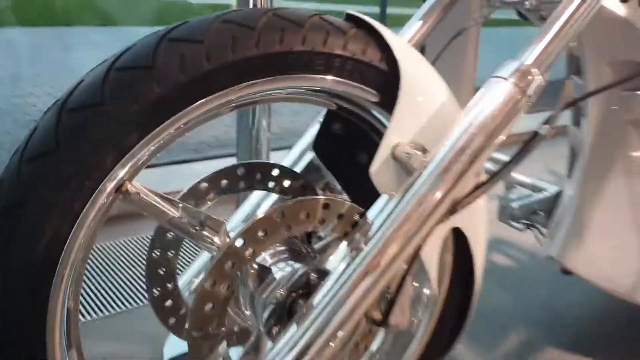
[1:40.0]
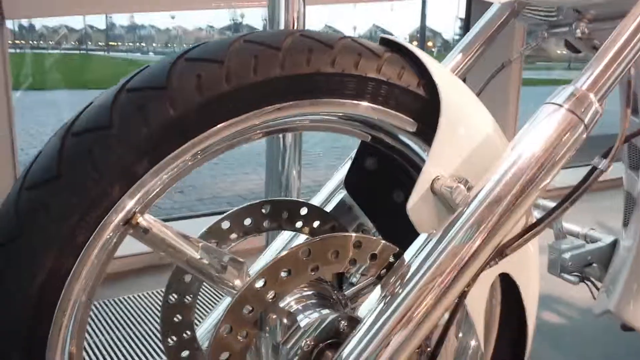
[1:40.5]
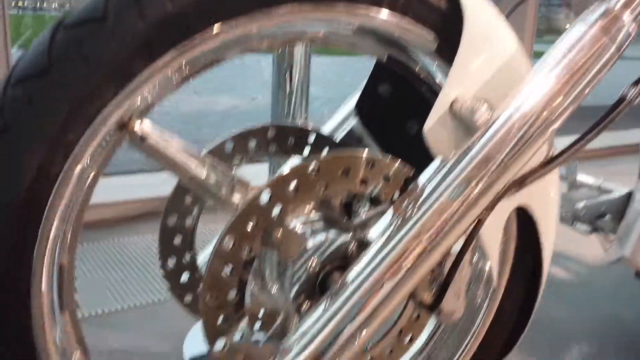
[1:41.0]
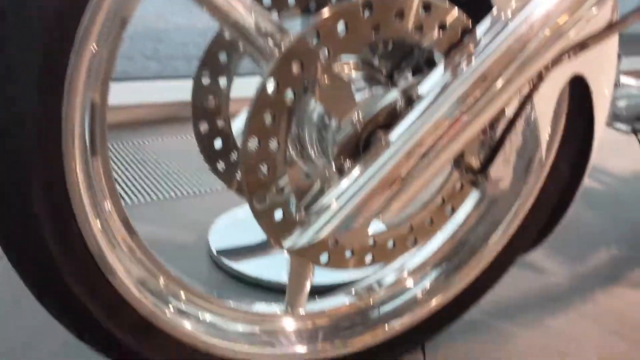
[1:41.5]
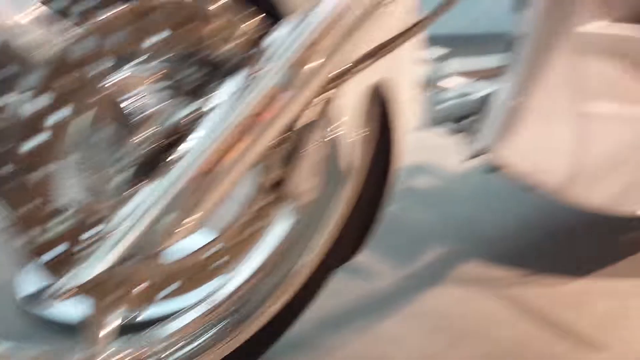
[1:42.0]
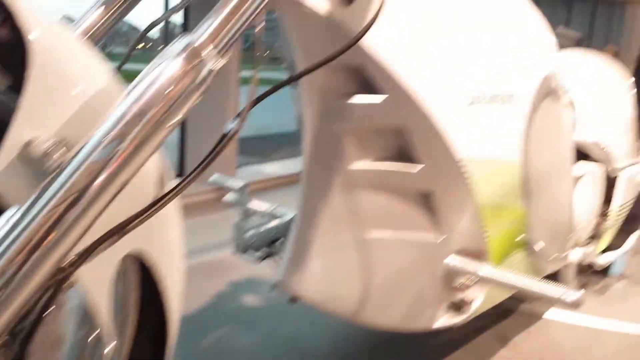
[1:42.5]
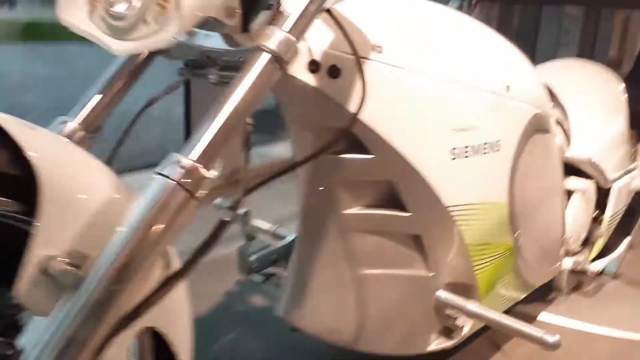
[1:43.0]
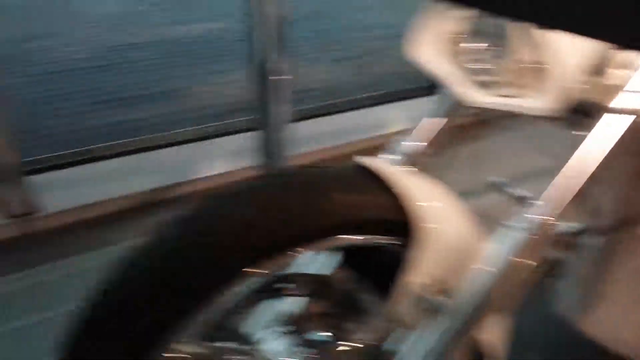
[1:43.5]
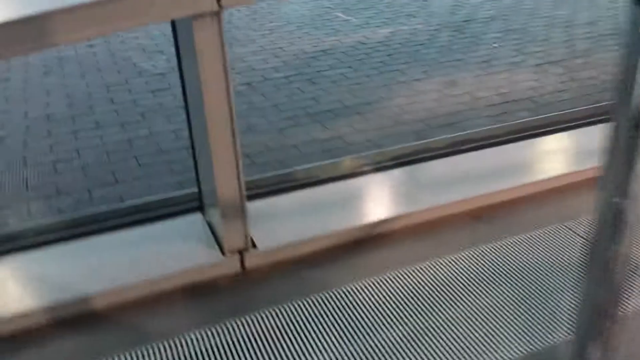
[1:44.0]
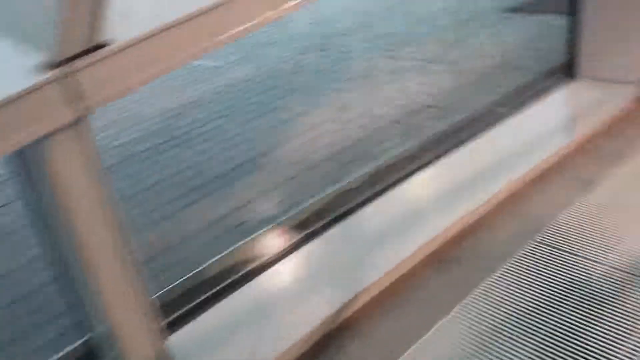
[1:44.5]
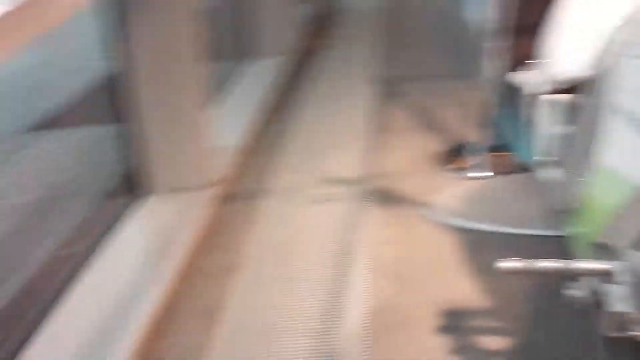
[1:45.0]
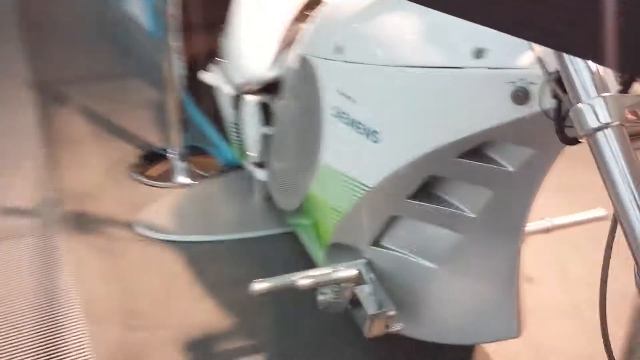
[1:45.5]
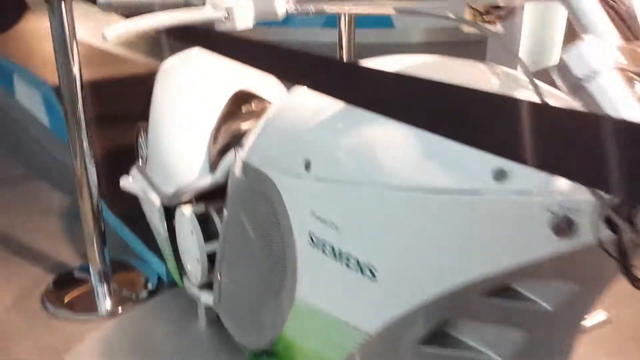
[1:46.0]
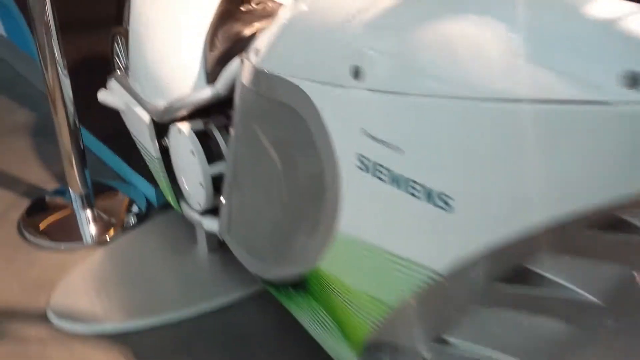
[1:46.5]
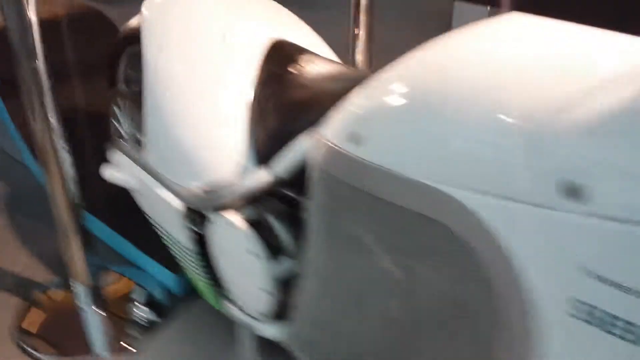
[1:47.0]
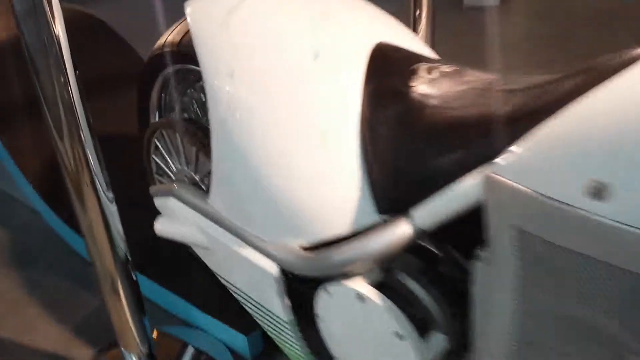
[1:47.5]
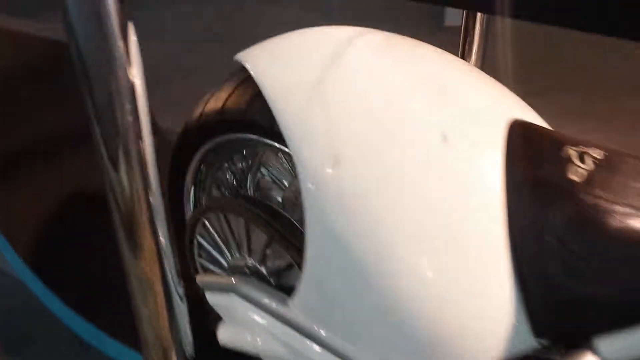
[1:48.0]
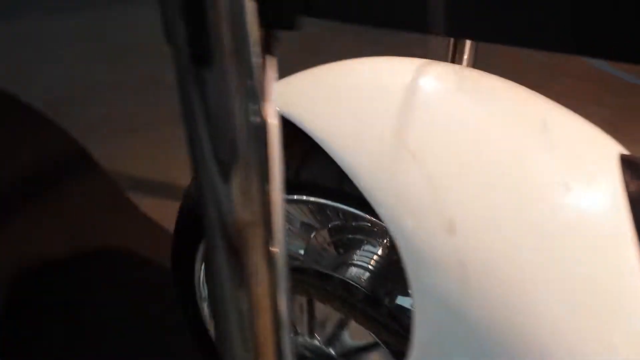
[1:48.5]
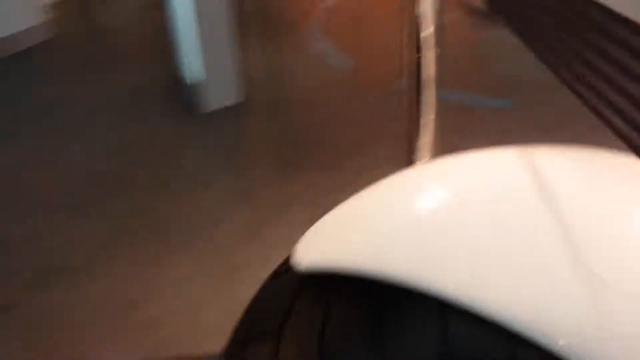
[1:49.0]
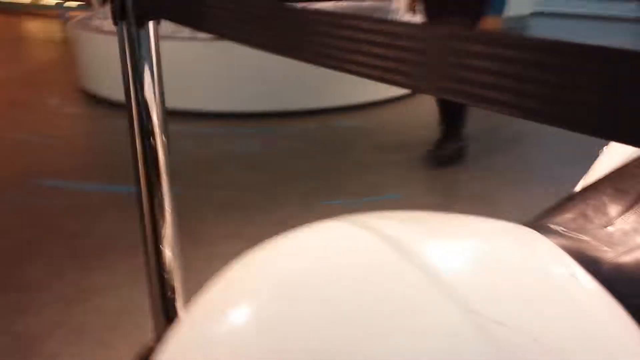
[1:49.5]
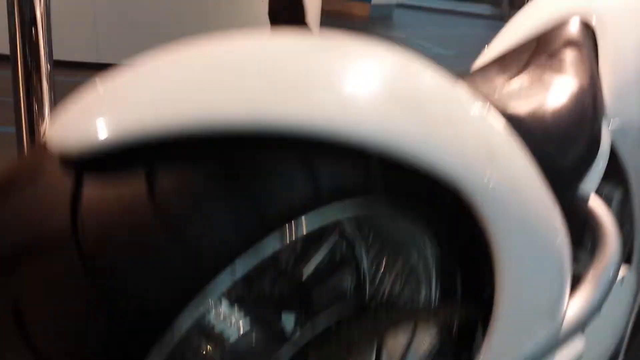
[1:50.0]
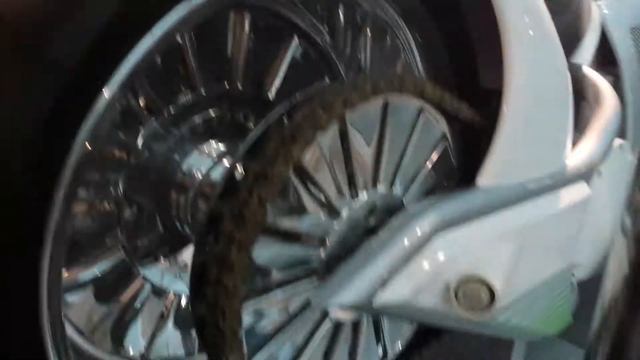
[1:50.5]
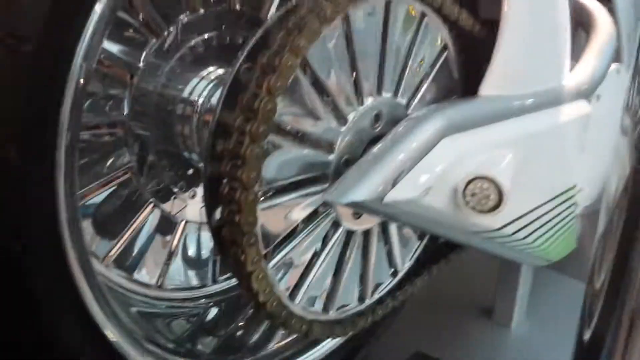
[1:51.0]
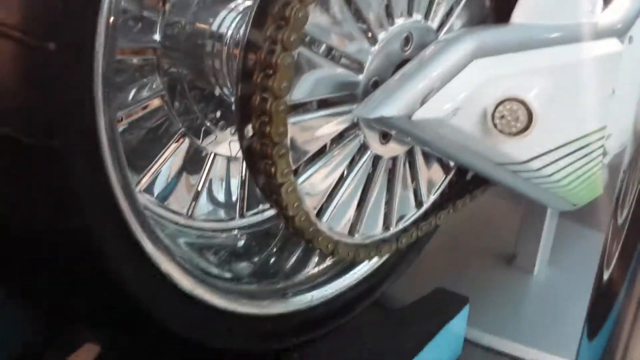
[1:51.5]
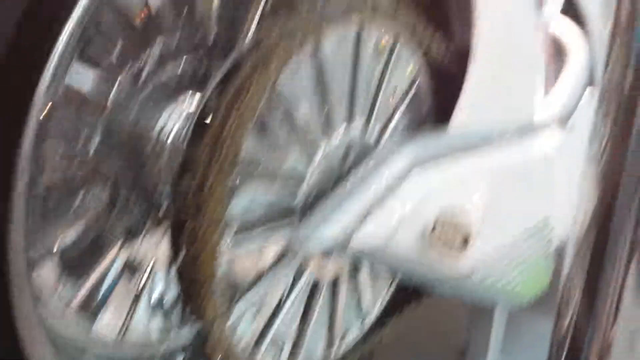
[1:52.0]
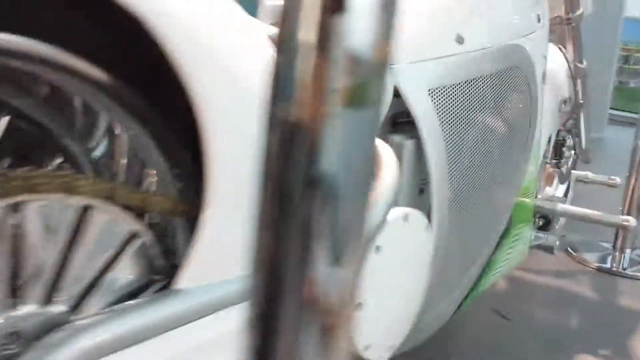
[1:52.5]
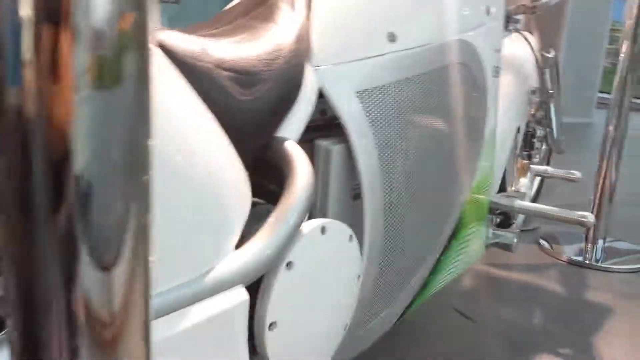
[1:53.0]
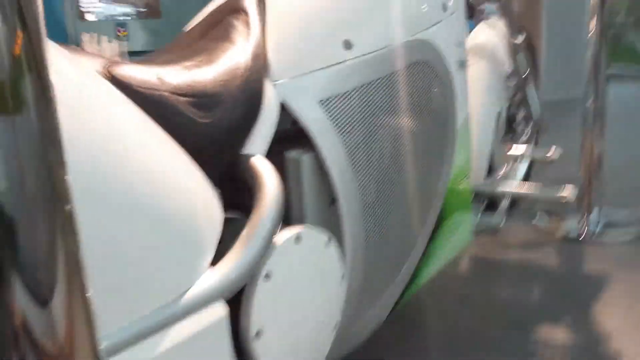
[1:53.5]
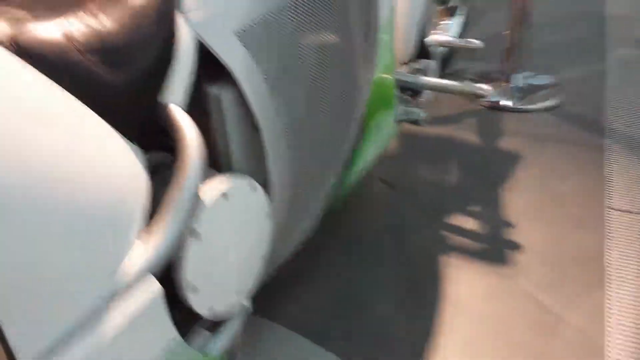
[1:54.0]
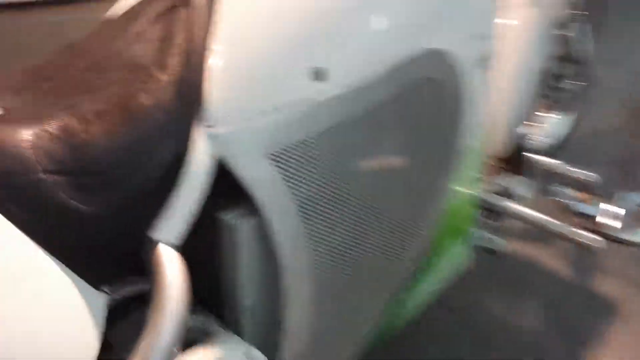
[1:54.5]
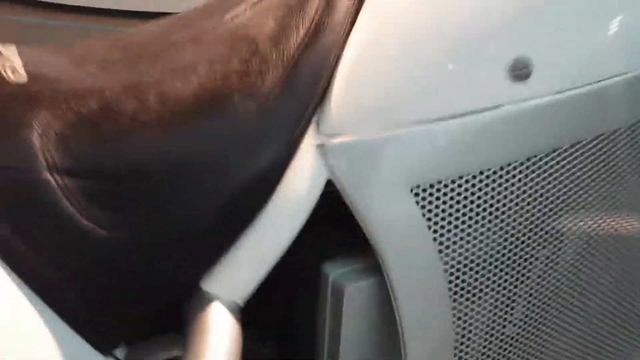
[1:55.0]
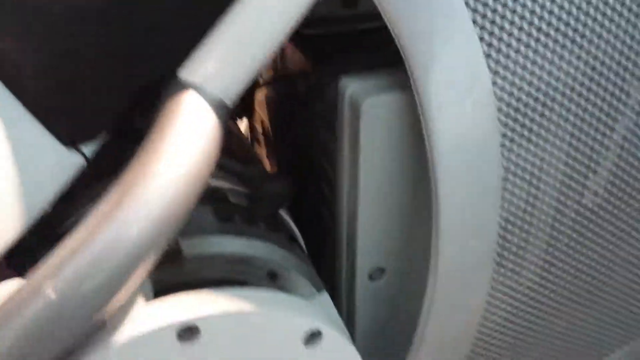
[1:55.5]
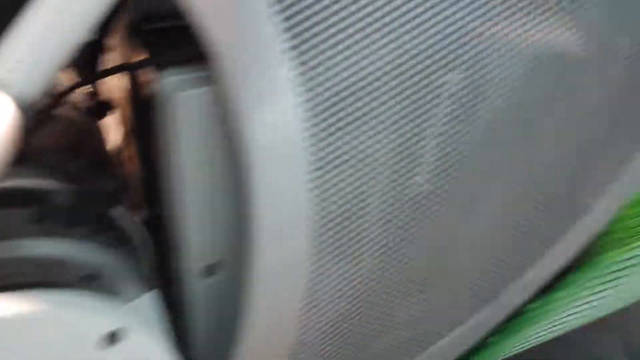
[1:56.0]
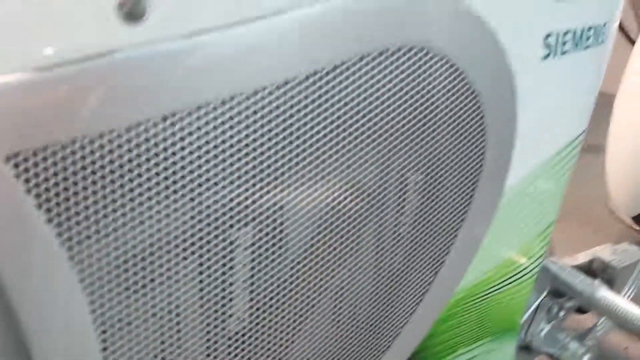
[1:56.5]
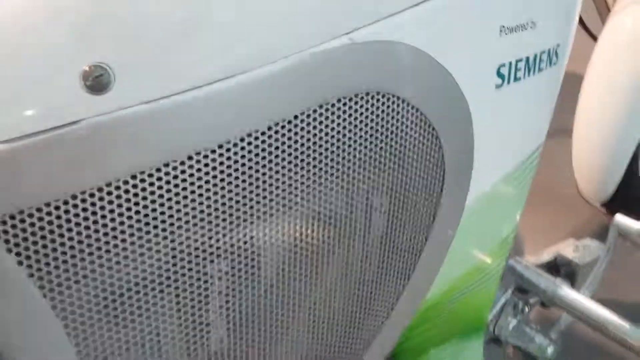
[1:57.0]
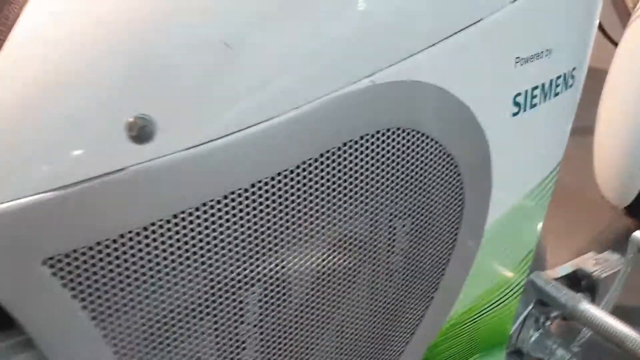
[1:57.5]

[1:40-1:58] The front tire of the motorcycle has a chrome frame and chrome brakes with discs on both sides. The forks coming down to hold the tire are chrome, and a white fender covers the tire. The camera goes down, zooms into the bottom, then follows the fork up to the front of the bike and goes all the way around the front to the other side. It goes to the back tire, down beneath the rear fender, to the chain where it attaches to the back tire, apparently at the sprocket. The camera quickly returns toward the front, showing the vent on this side under the seat, then goes down and shows inside it, where there is a battery on the other side of the vent. It is almost possible to see through to the other side, and some light barely comes through from behind the batteries.